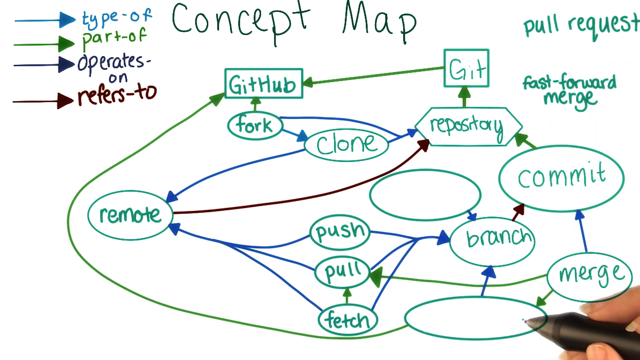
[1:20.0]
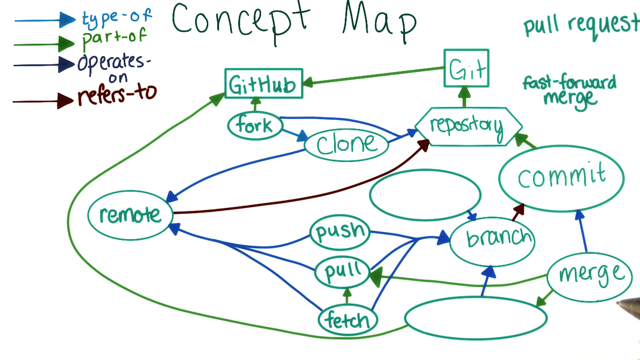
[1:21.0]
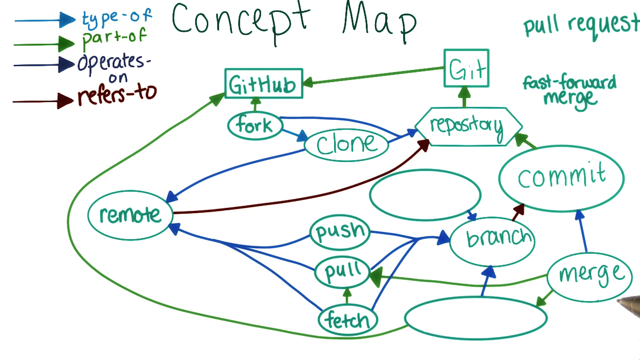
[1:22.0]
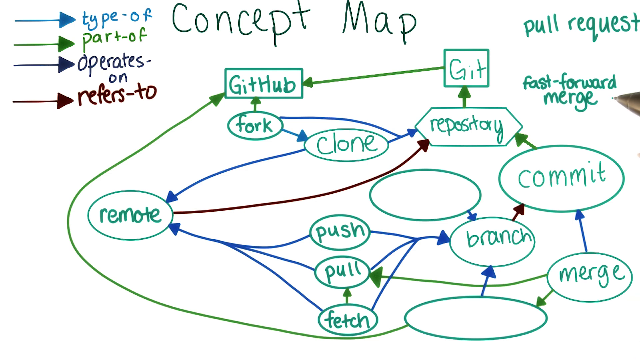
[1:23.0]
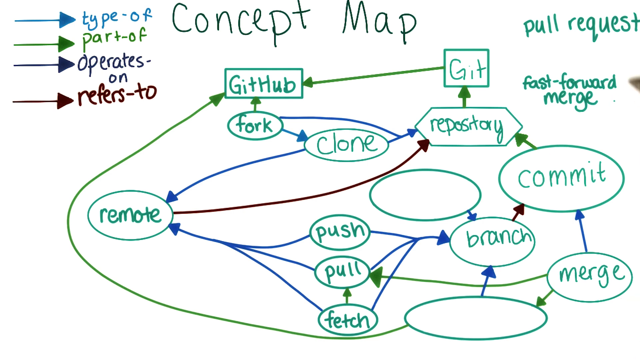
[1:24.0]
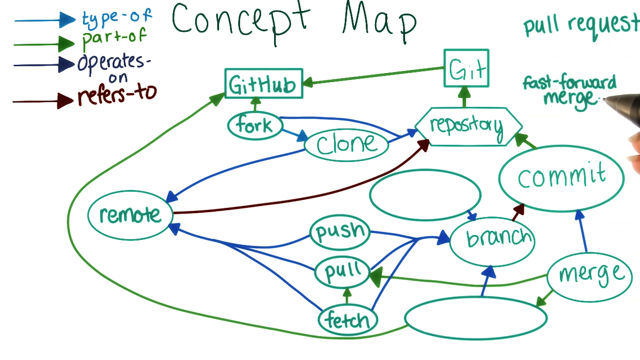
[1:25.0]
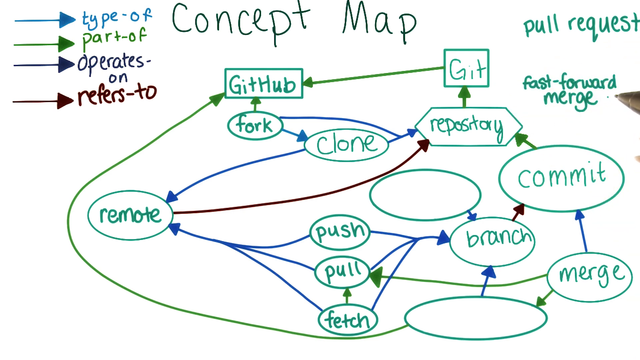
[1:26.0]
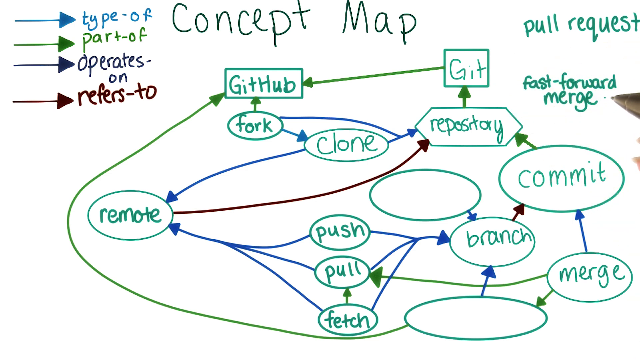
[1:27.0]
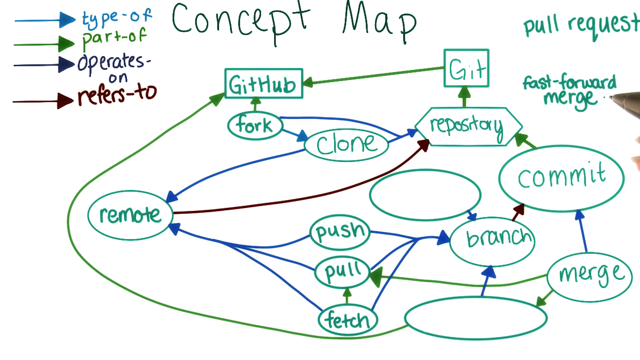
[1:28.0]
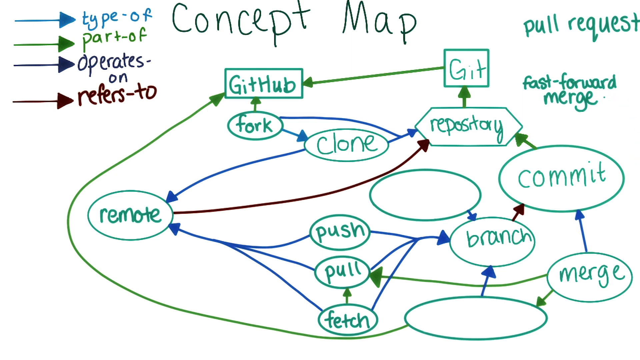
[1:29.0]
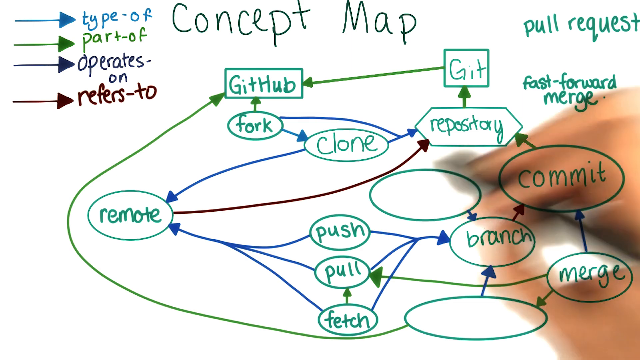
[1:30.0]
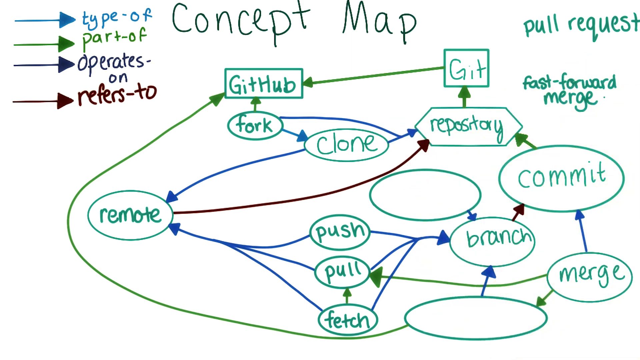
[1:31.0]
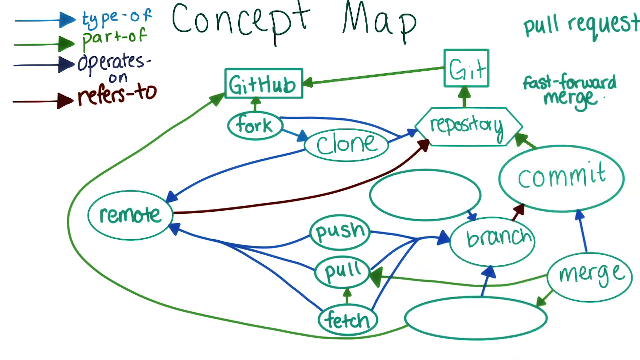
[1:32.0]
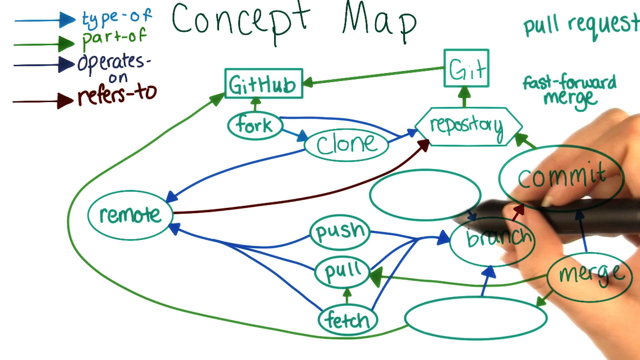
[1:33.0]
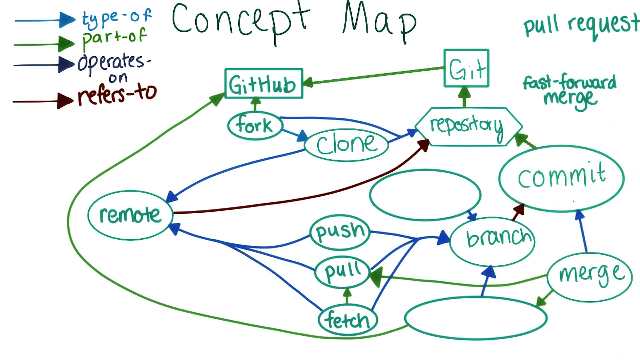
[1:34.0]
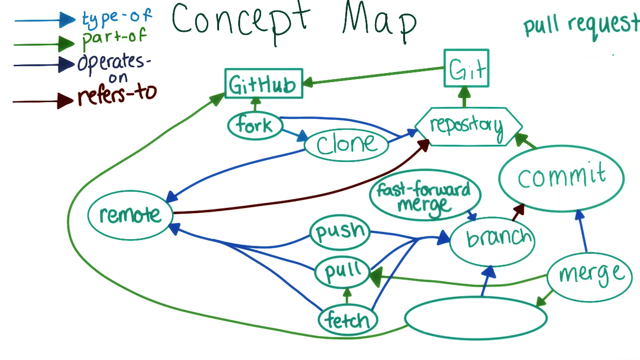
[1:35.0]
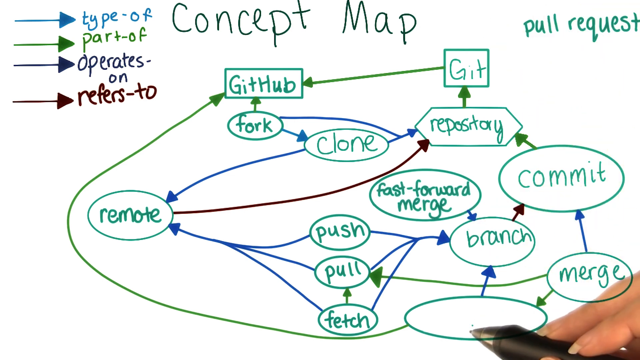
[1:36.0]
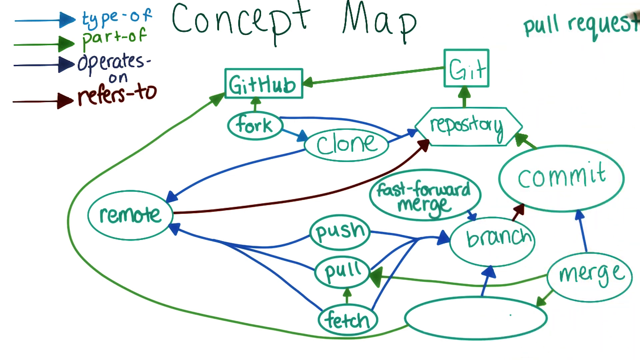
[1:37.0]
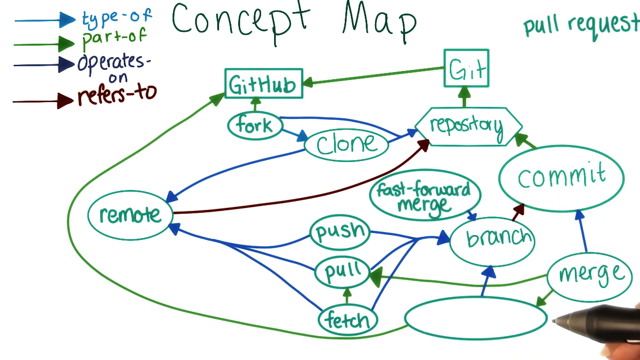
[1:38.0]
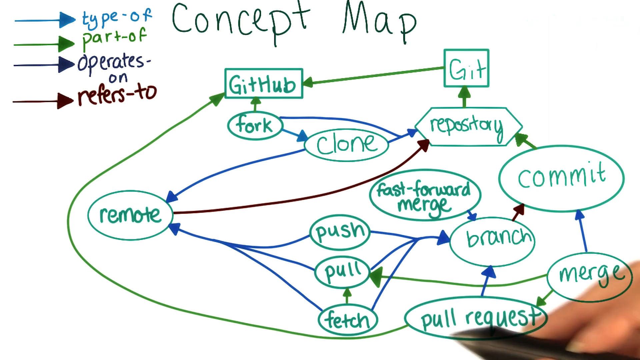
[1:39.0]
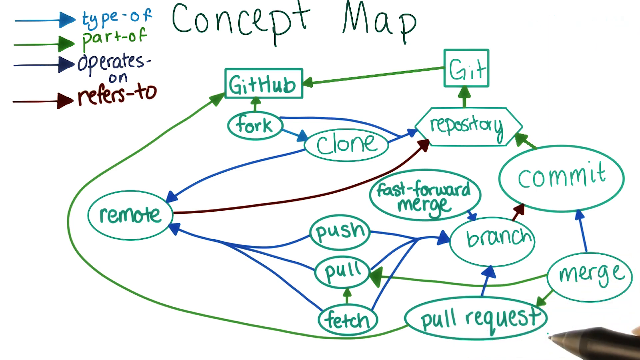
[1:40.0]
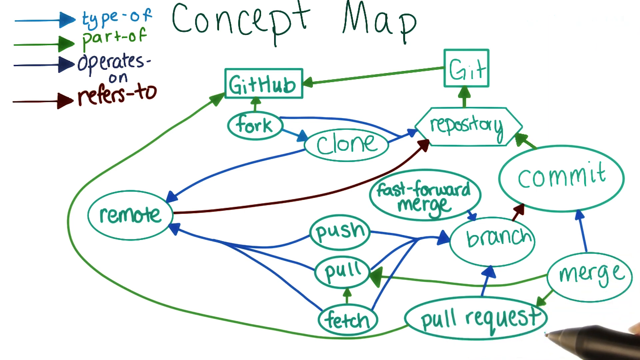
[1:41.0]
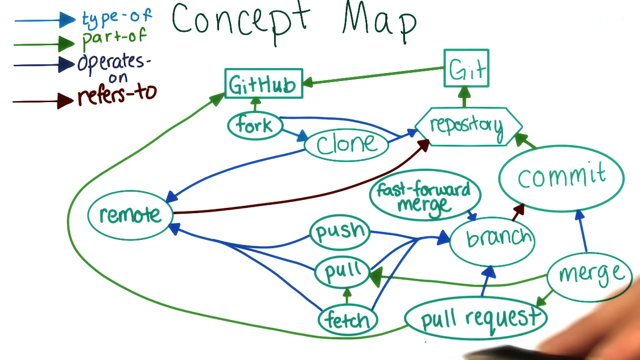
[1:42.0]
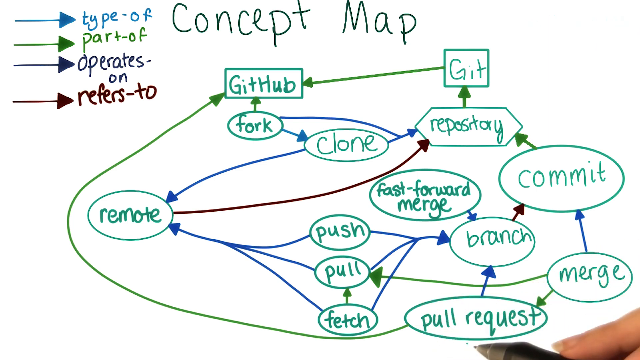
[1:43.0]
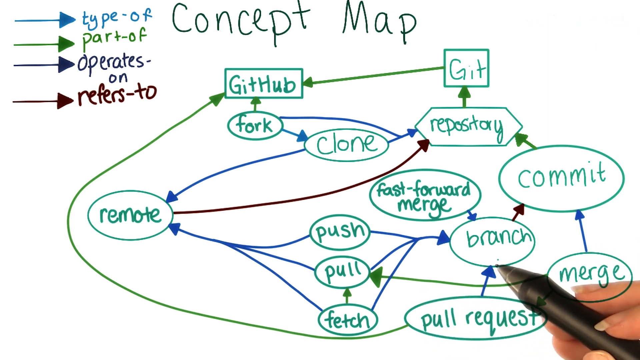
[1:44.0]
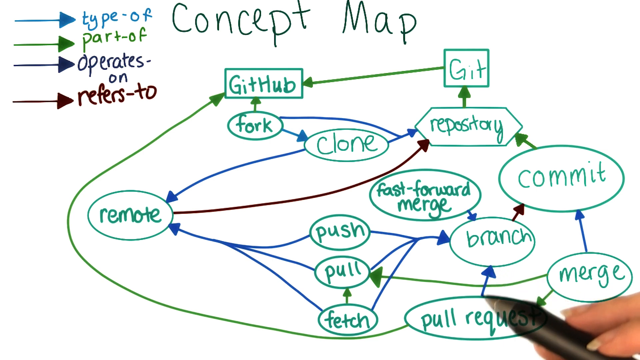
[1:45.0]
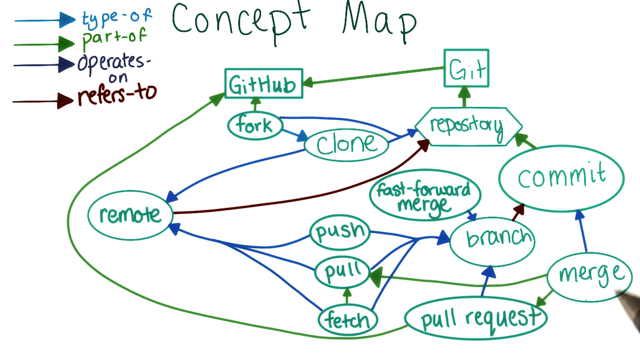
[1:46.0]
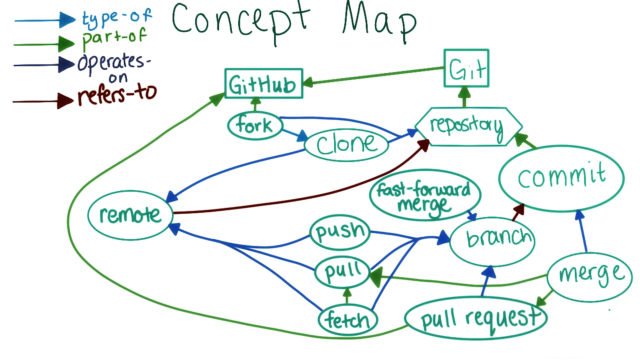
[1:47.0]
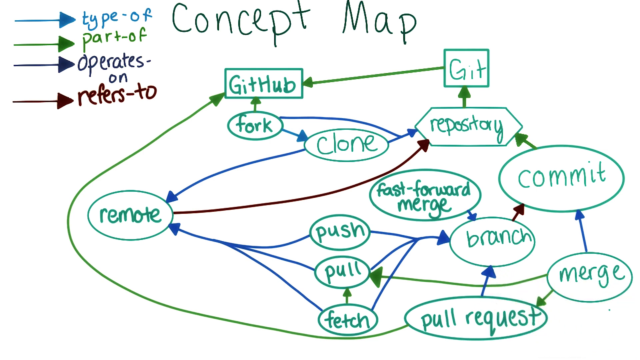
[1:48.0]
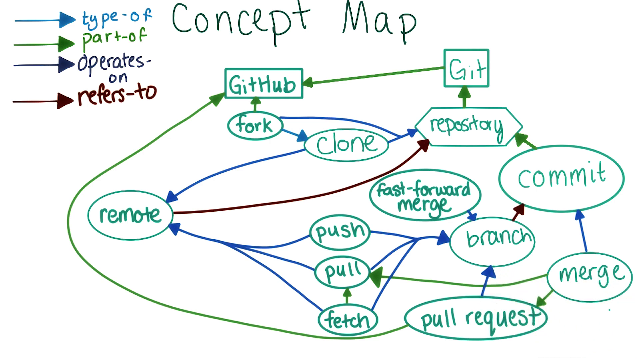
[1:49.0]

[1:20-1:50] The concept map shows arrows pointing to different boxes or circles: green arrows, blue arrows and a brown arrow. The lettering is green, and the circles and squares are green with words written in them: "remote," "github," "fork," "clone," "repository," "git," "commit," "branch," "merge," "push," "pull" and "fetch." The woman goes to the words on the right; when she clicks a circle, the word fills in the empty space. Words move from the right, and when she hovers the pen over the empty circle, the word goes there. She makes pretend circles with the pen around the things that are connected, showing how they all merge together in the map.